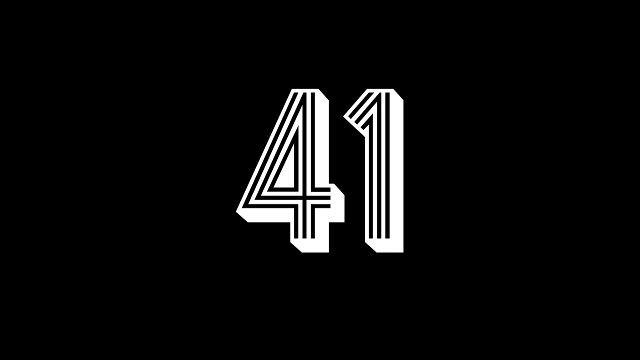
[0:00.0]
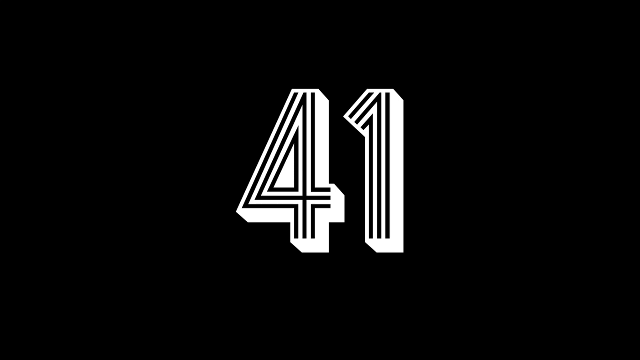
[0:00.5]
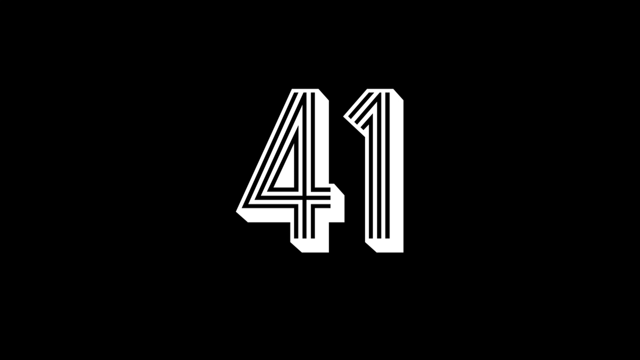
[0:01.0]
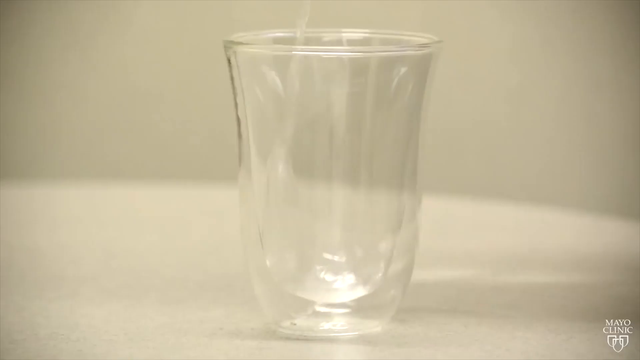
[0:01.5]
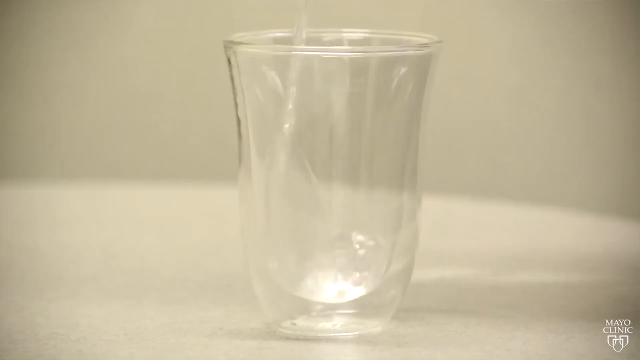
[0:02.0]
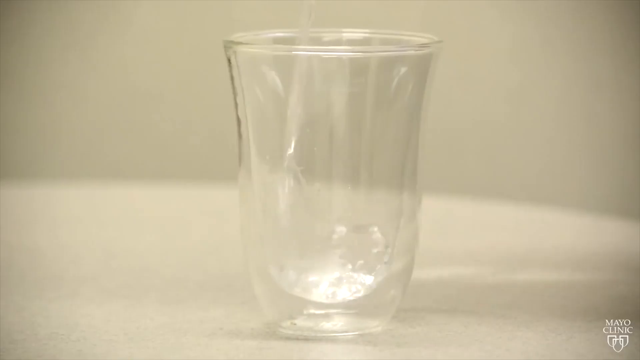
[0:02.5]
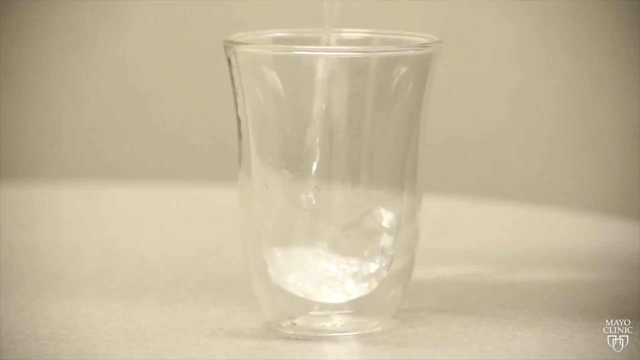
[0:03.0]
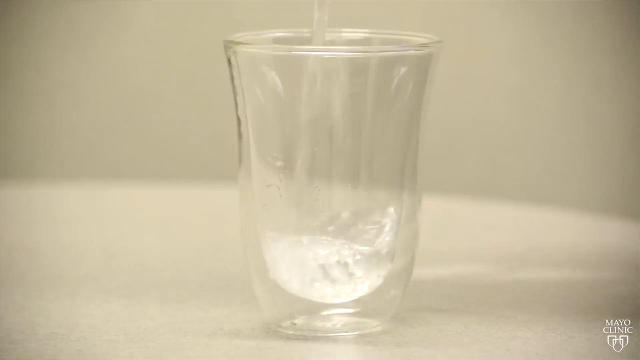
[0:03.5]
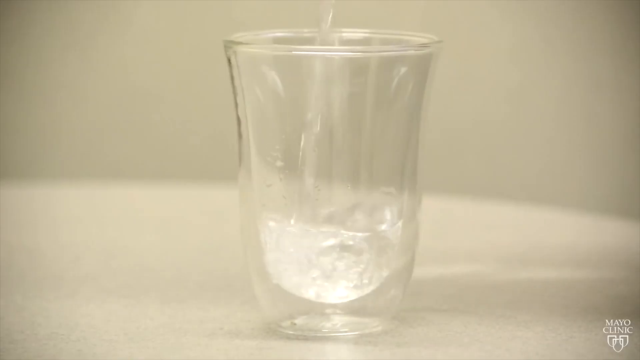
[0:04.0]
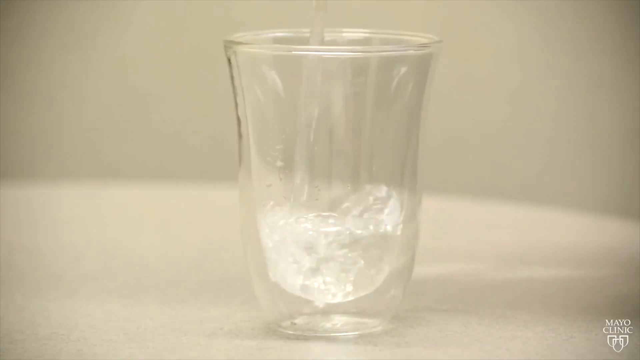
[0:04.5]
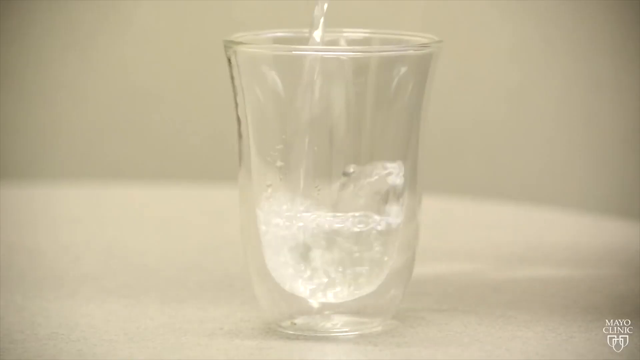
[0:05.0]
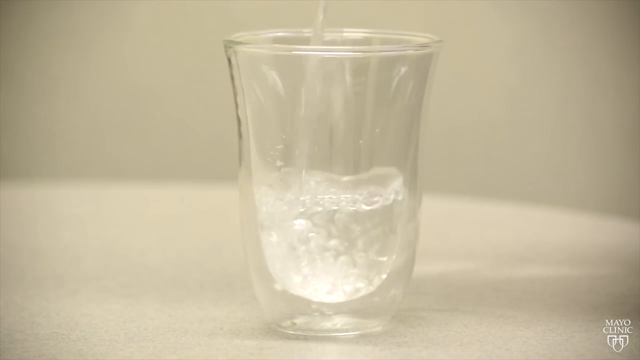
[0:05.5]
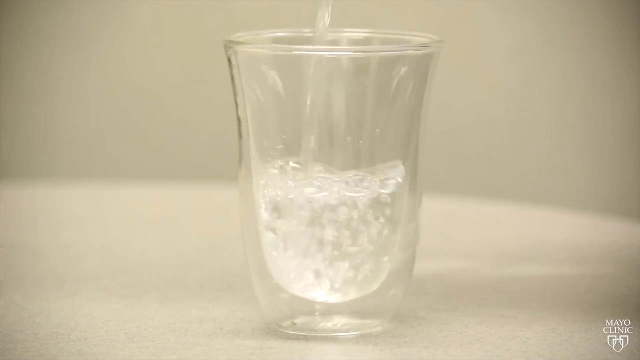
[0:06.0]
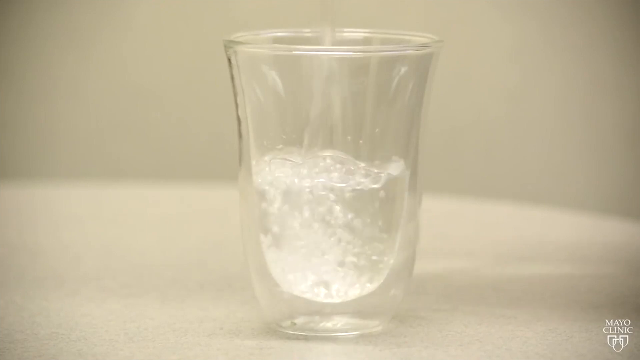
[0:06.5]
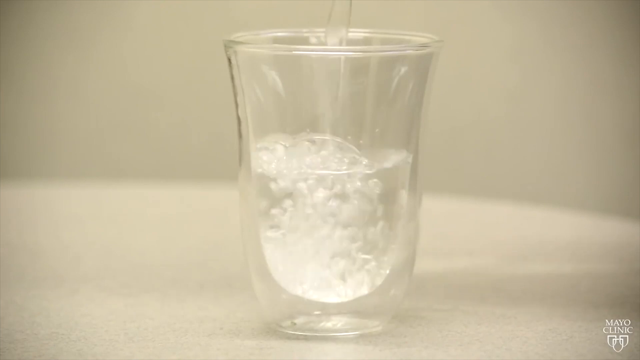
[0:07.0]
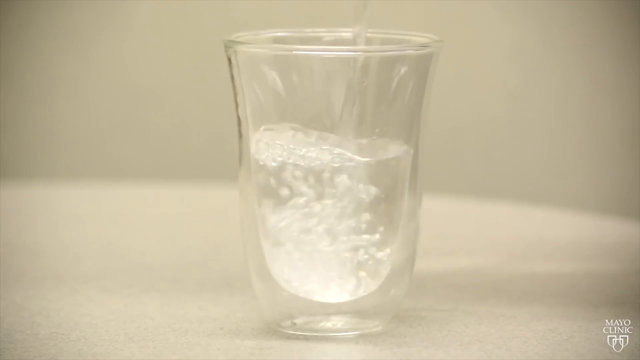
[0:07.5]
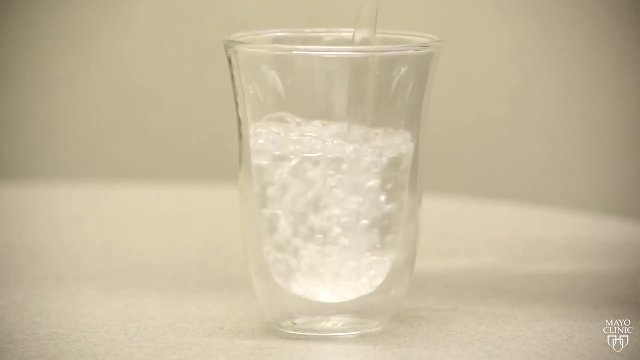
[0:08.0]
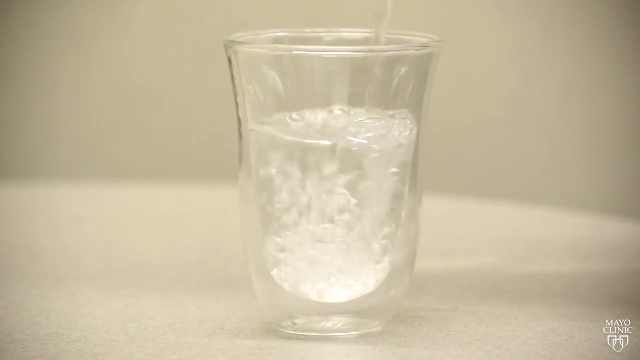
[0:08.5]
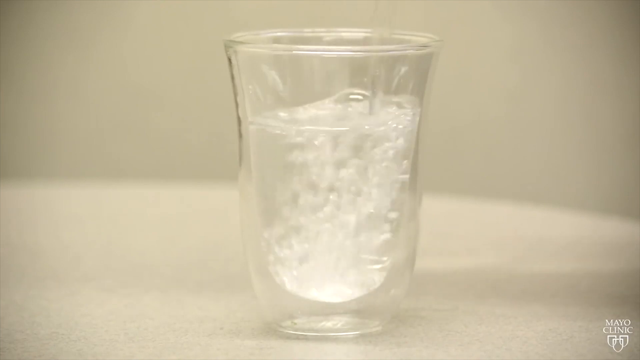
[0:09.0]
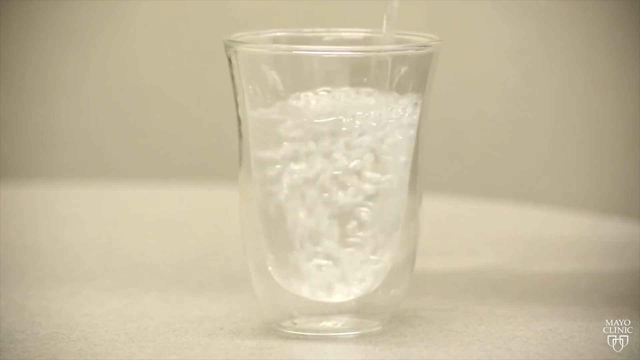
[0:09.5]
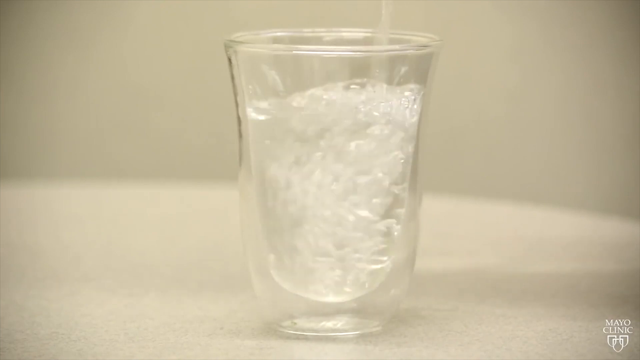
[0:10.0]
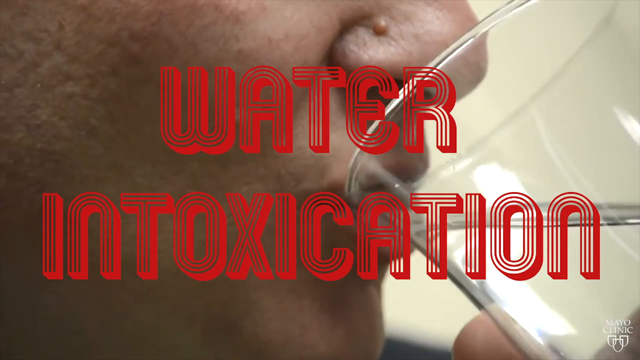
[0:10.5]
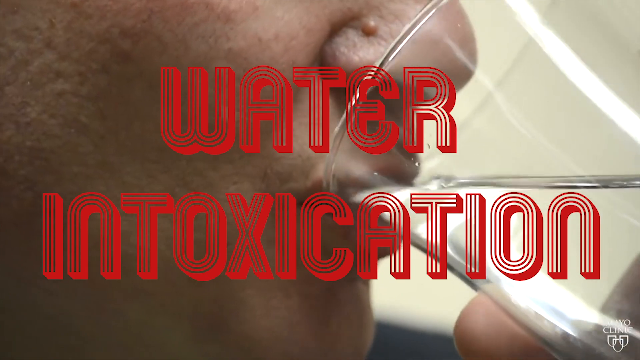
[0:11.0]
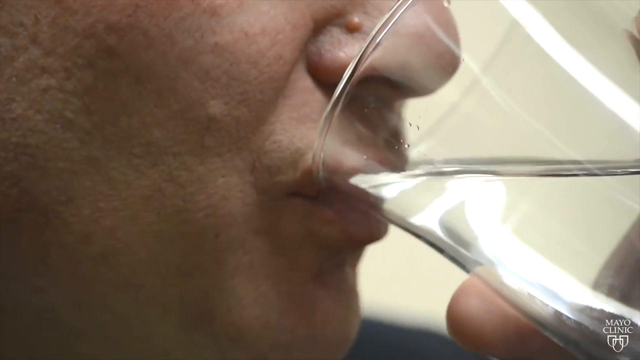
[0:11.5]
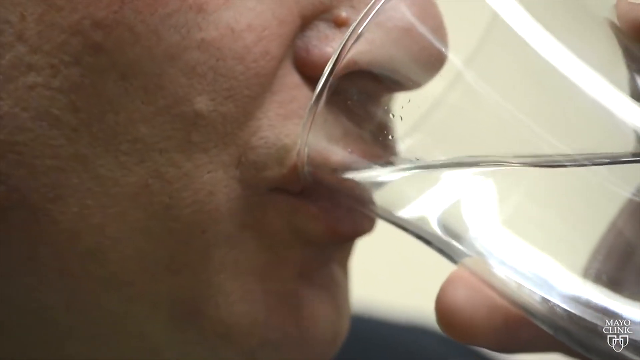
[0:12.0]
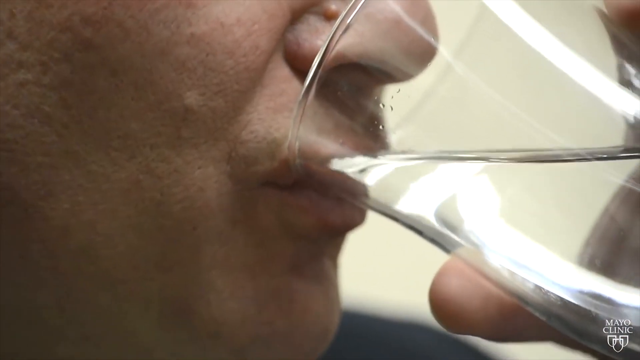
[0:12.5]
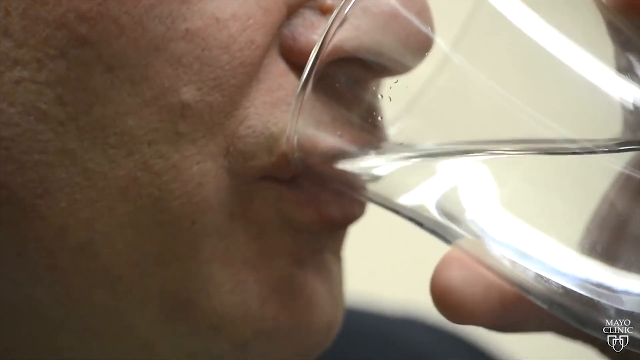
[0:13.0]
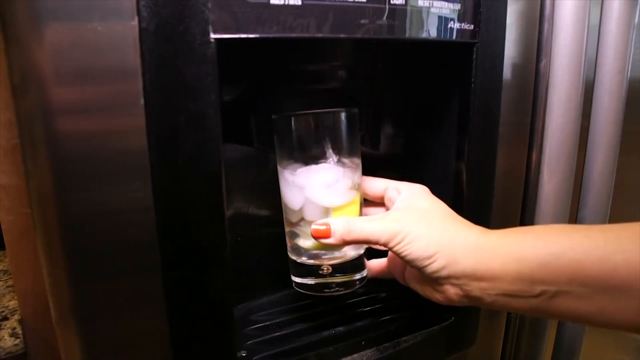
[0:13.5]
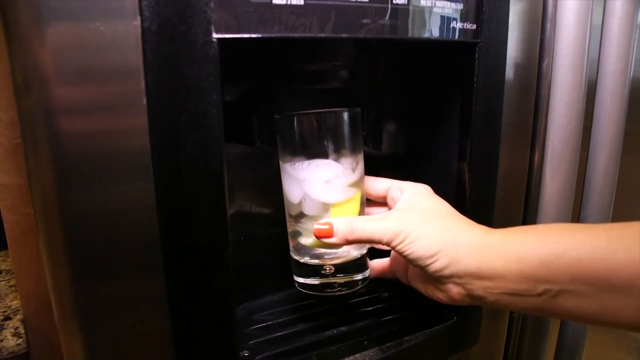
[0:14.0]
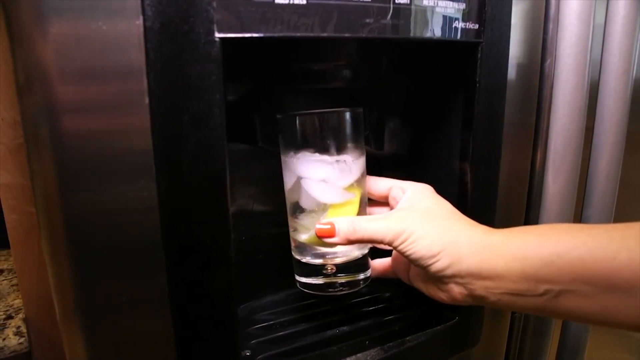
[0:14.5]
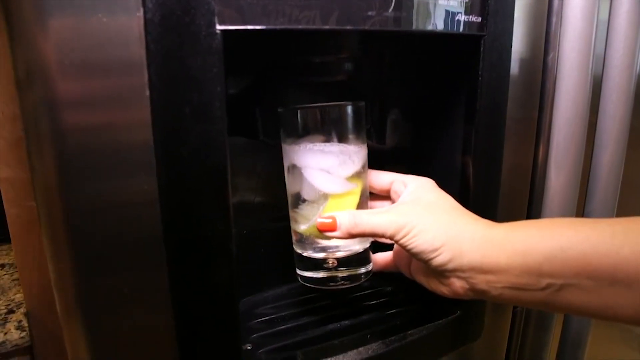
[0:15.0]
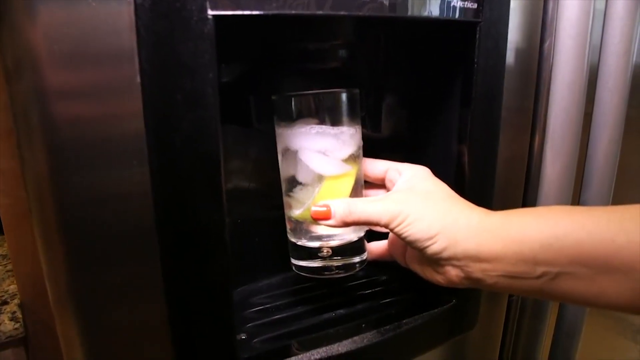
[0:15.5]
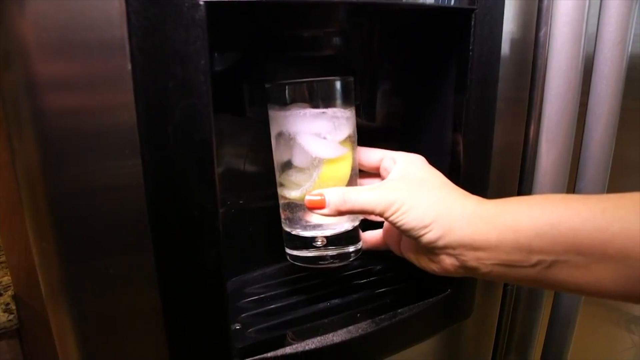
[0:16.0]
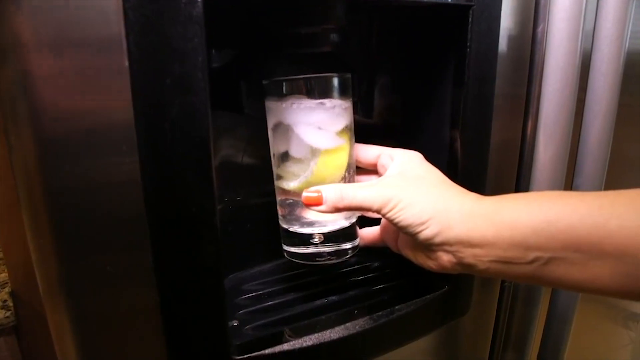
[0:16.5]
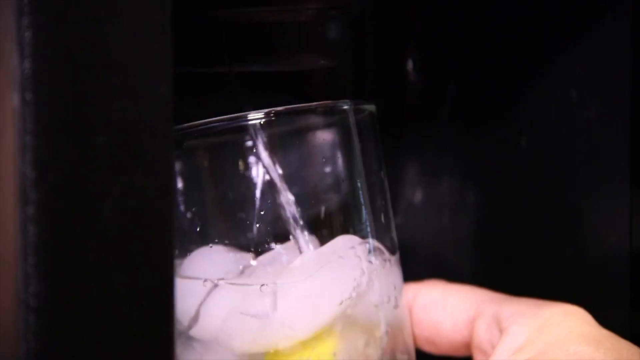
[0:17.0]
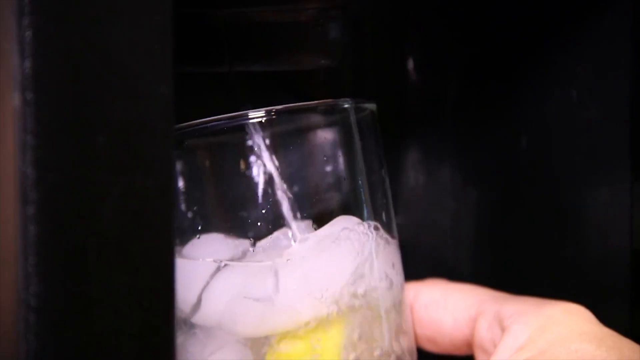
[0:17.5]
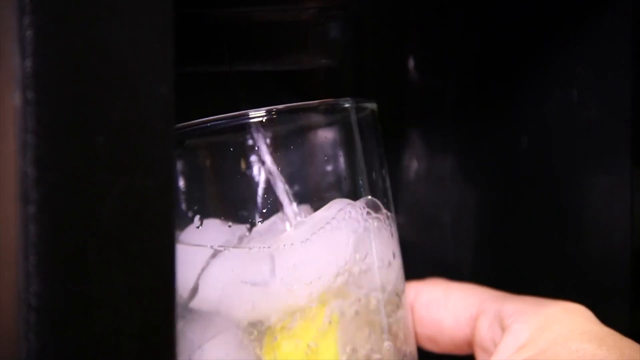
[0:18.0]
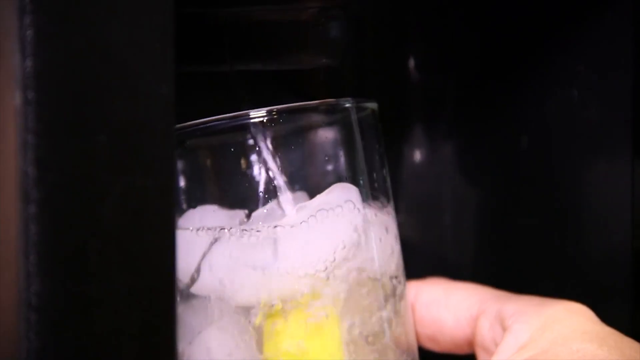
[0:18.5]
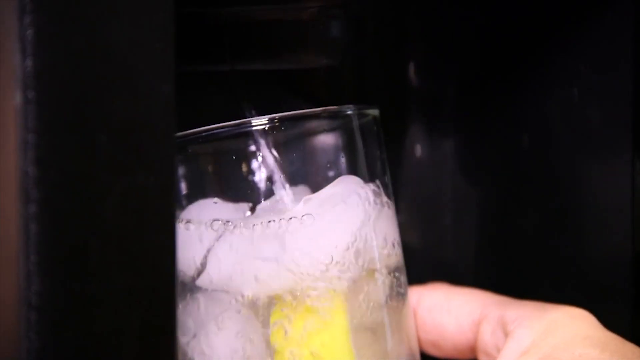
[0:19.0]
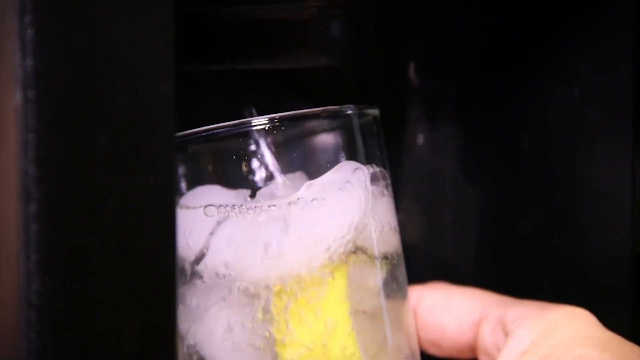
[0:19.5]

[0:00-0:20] The video opens on a black background showing the number 4-1. It then transitions to a glass on a round white table as water is slowly trickled into it. When the glass reaches the halfway point, multiple bubbles form where the incoming water contacts what is already in the cup. The glass keeps filling until it is about one inch from the rim. The shot cuts to a man drinking the glass of water; only his nose and mouth are visible, with his face facing the right of the camera. Text appears above the image of the man drinking that reads "water intoxication." The man starts sipping heavily from the cup. Next, a woman's hand holds a cylindrical glass filled with white ice cubes, filling it with a jet of water from a refrigerator door. Underneath the ice is a small wedge of yellow lemon. The camera cuts to a closer zoom in on the water jet filling the glass.